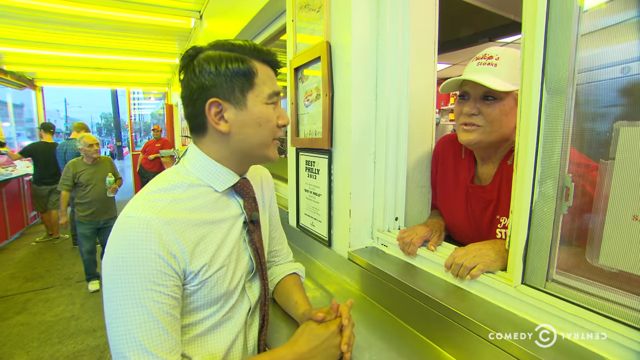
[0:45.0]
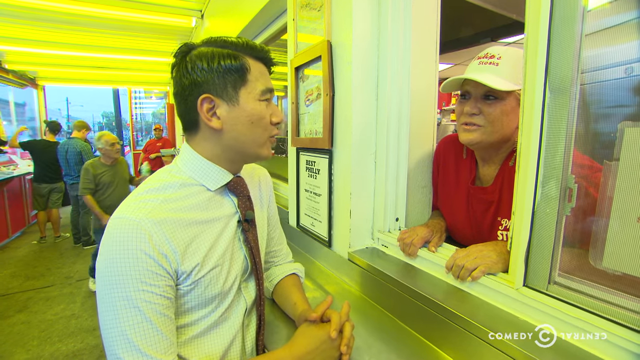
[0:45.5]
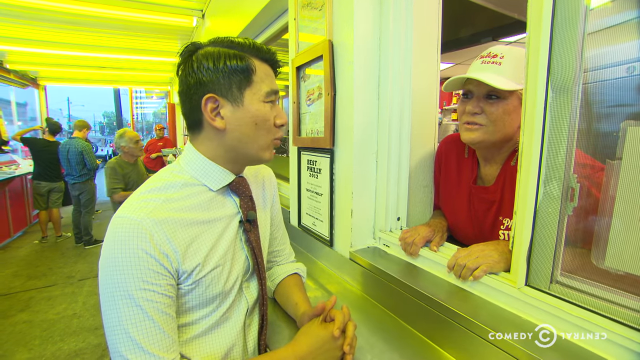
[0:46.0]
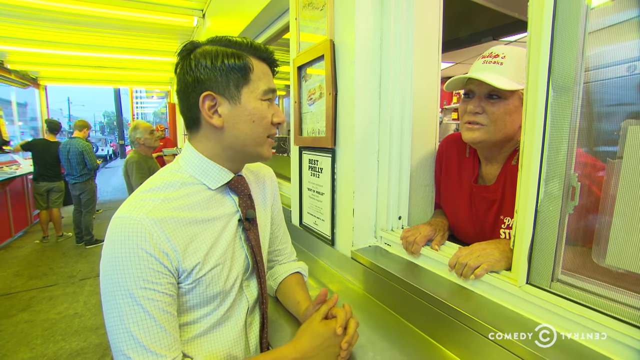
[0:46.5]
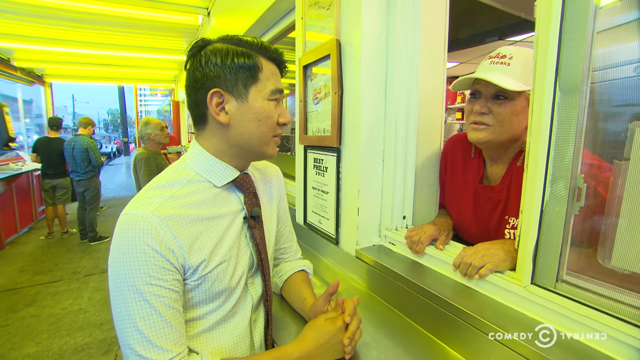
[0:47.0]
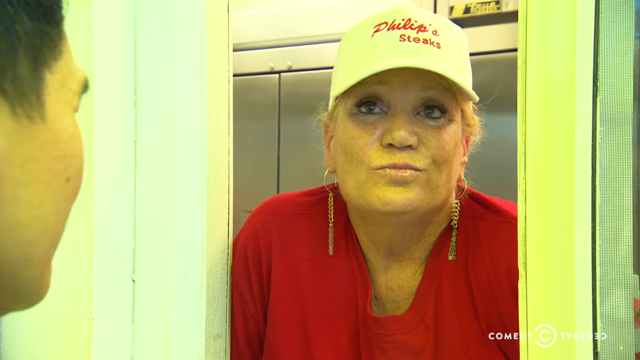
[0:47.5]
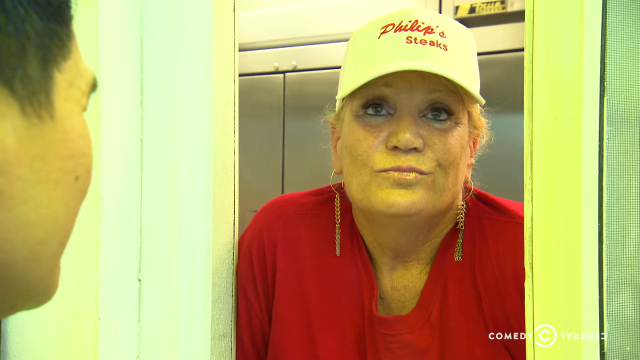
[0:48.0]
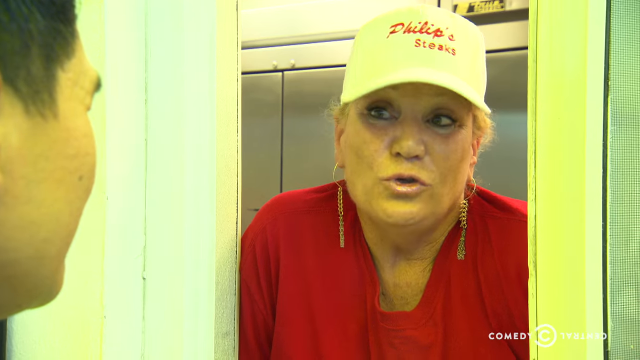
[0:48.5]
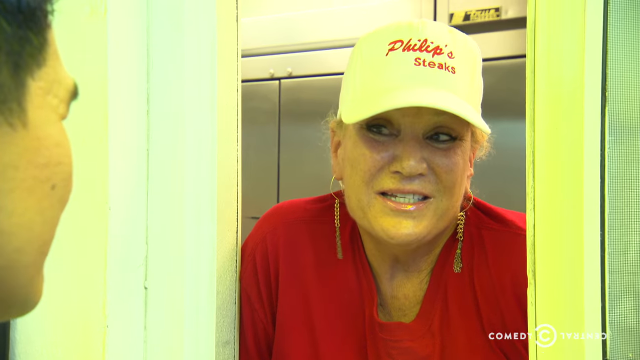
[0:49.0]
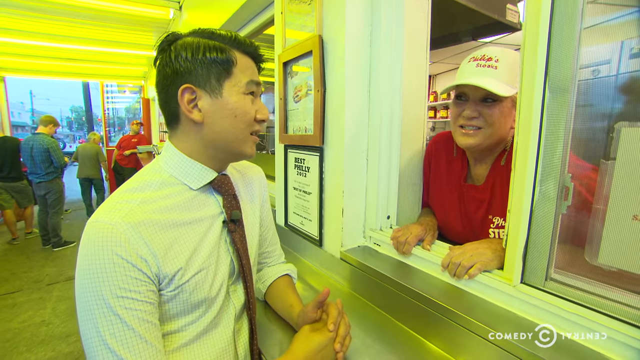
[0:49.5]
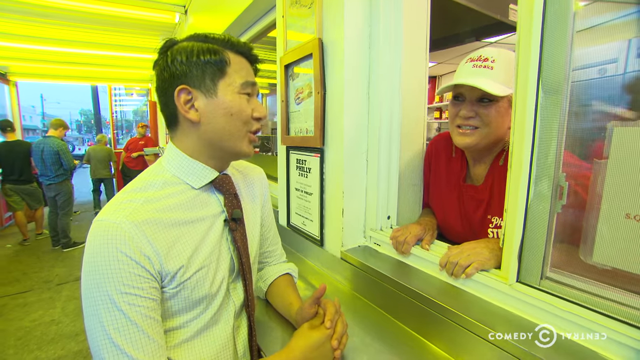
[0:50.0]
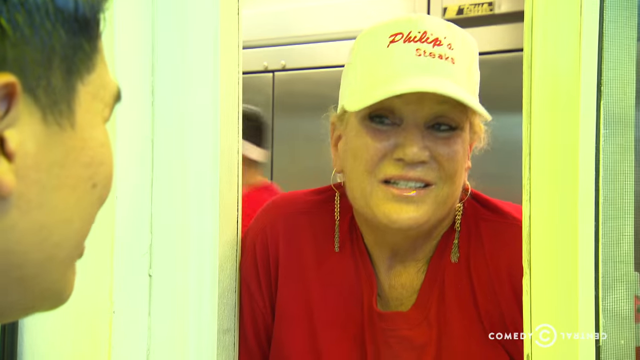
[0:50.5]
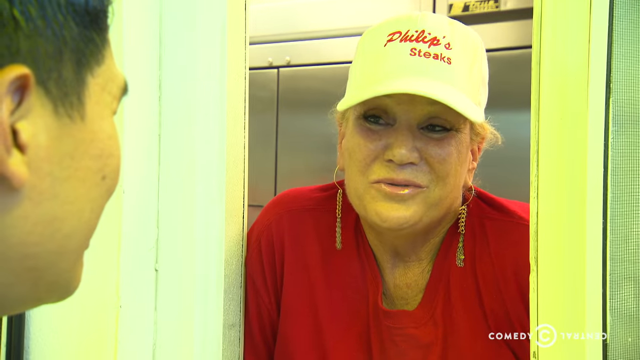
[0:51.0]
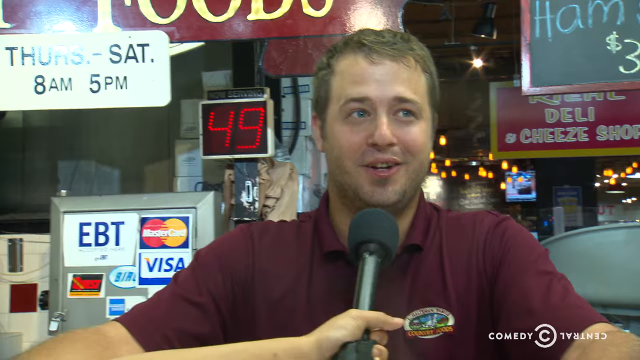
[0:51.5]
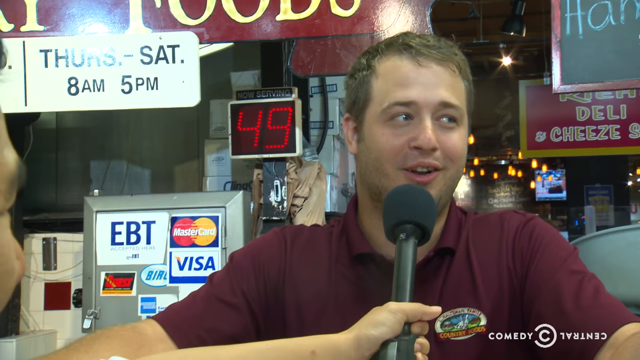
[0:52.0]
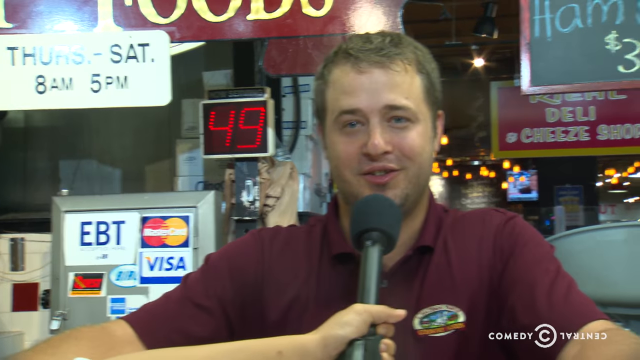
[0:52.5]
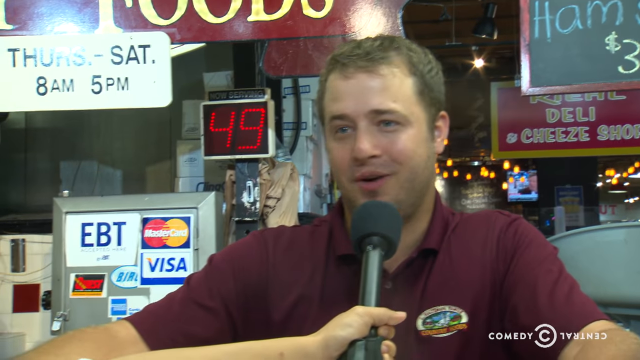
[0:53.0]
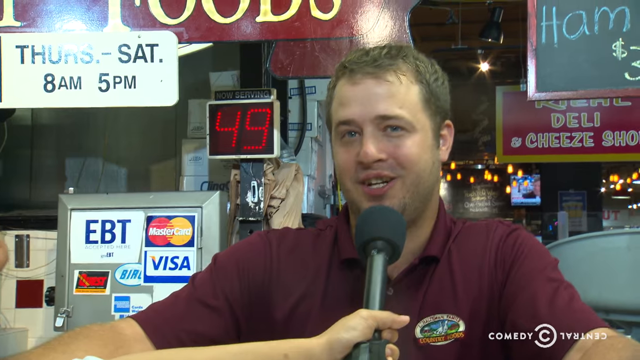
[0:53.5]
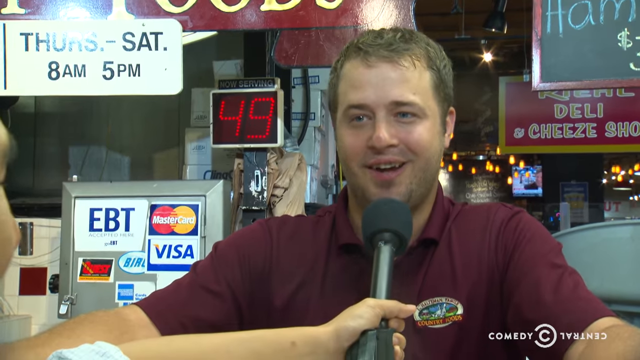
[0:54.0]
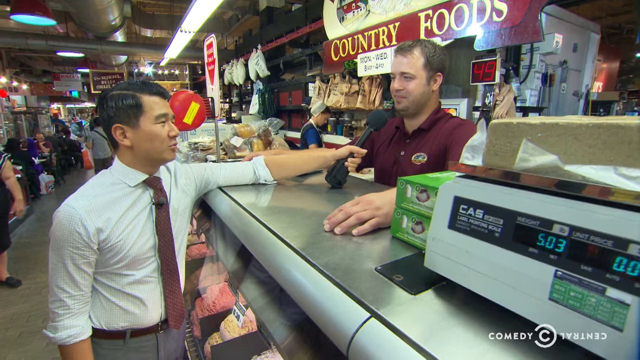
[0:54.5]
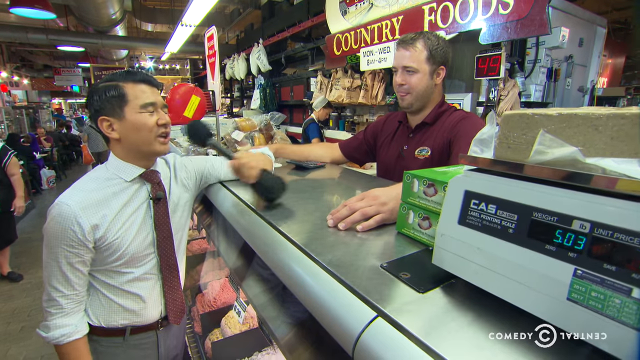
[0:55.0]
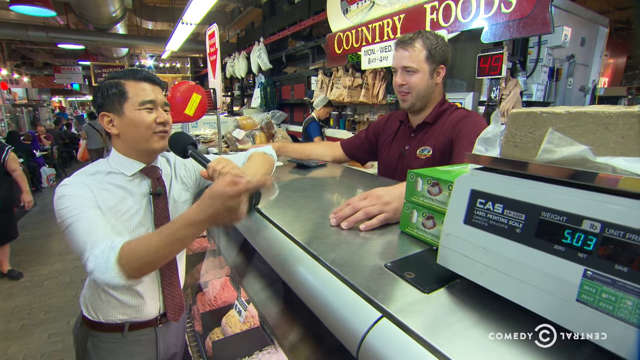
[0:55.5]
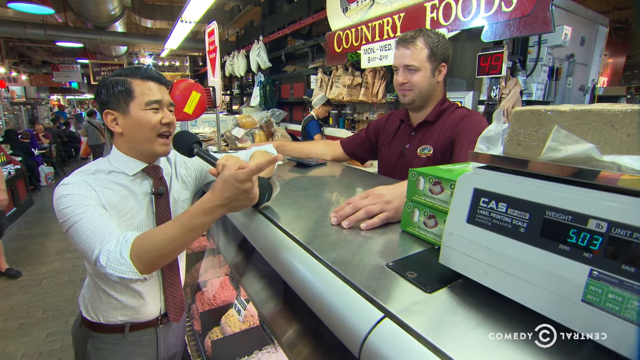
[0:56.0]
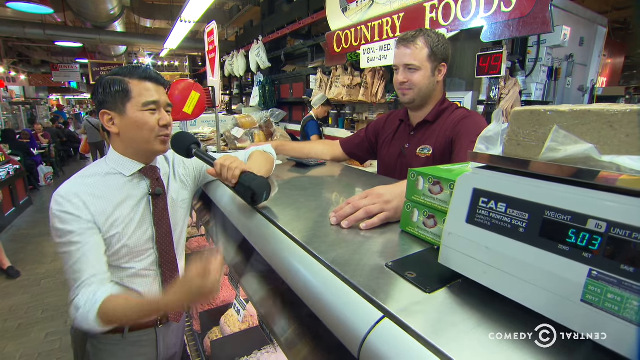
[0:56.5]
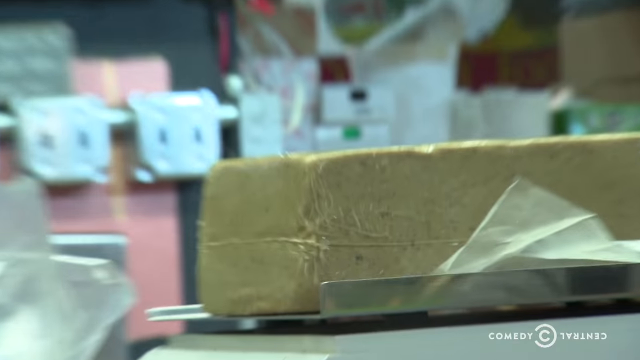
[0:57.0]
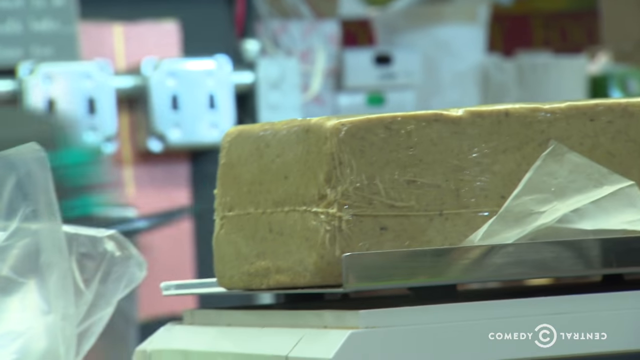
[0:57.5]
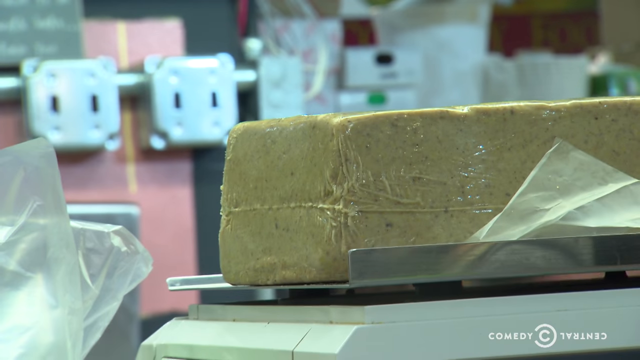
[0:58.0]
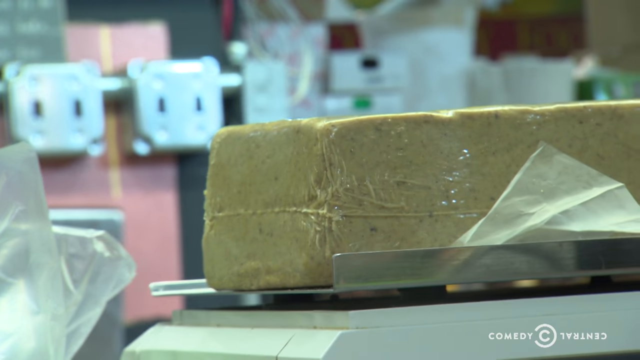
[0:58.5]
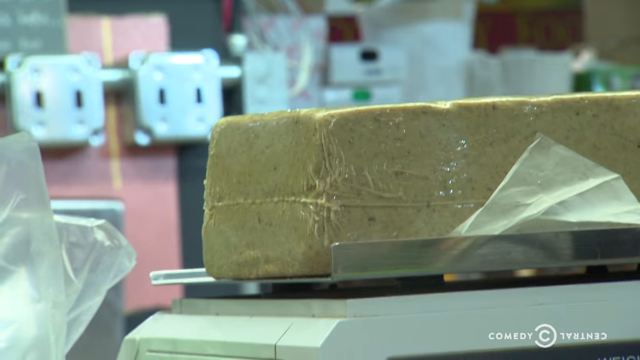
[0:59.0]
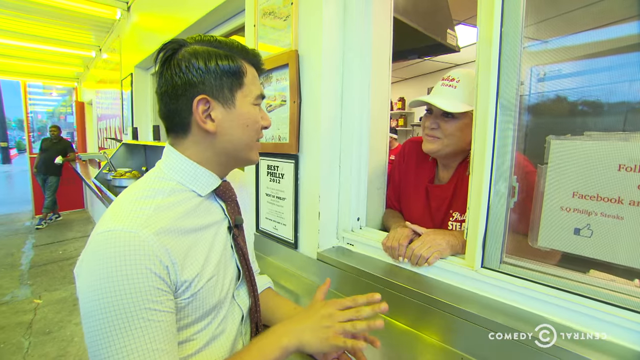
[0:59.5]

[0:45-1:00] A man who appears to be a reporter, Asian and in his late 20s to early 30s, wears a white patterned dress shirt with a tie and gray pants. He speaks with a woman wearing a red shirt and a white hat with "Phillips Steaks" on it; they talk to each other through a small square window, with people milling about in the background. In a different scene he speaks with a white man in a maroon polo shirt behind the deli counter, who talks into the microphone the reporter is holding. They point at a big block of something on a scale and smile. Meats of various sorts are in the refrigerated area under the counter, and people mill about in the background of the market where the deli is.